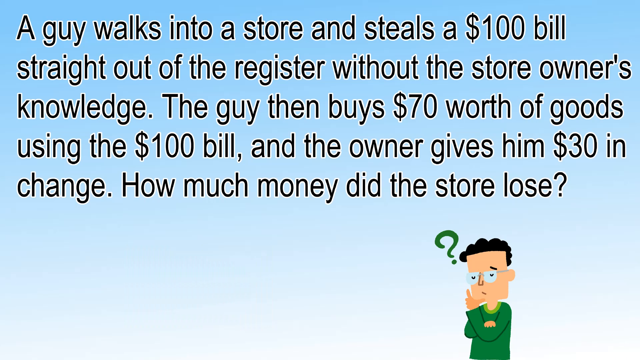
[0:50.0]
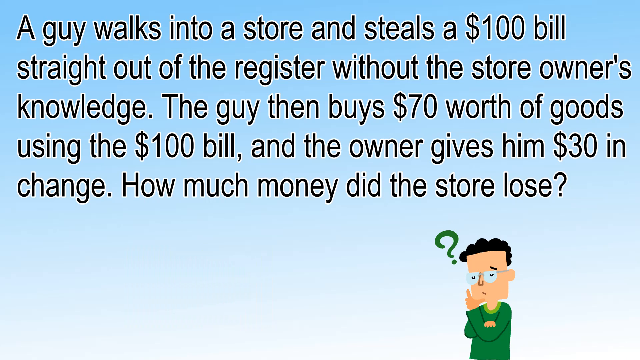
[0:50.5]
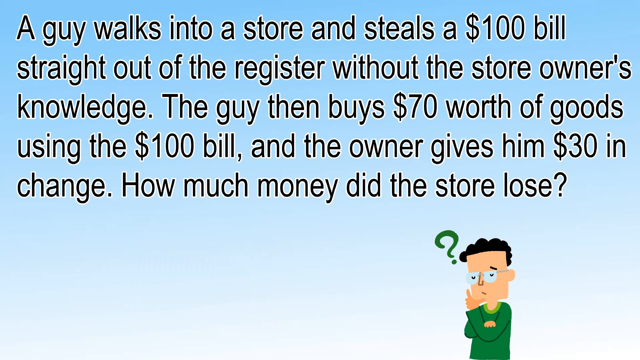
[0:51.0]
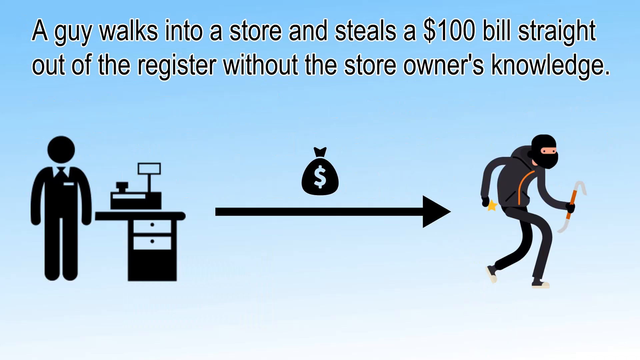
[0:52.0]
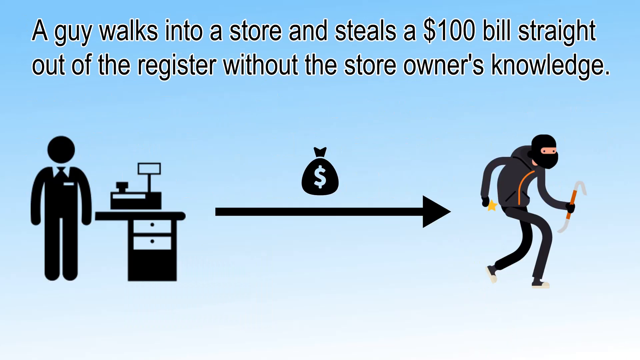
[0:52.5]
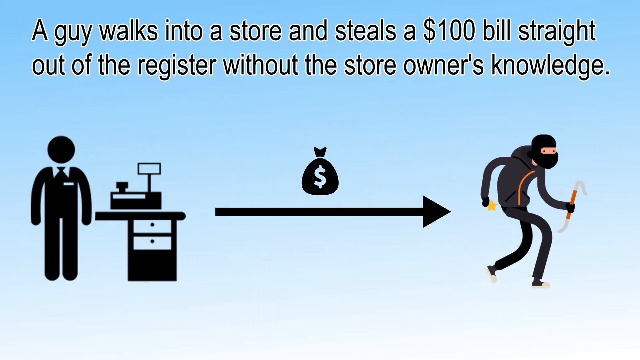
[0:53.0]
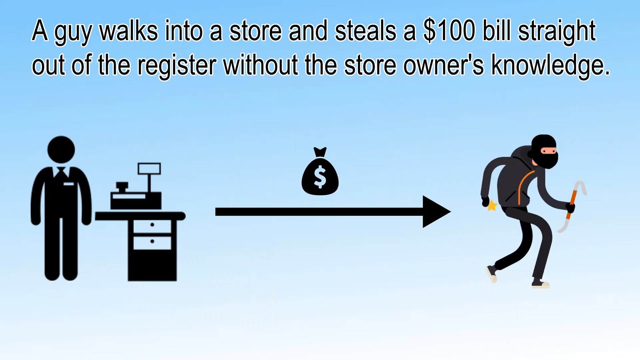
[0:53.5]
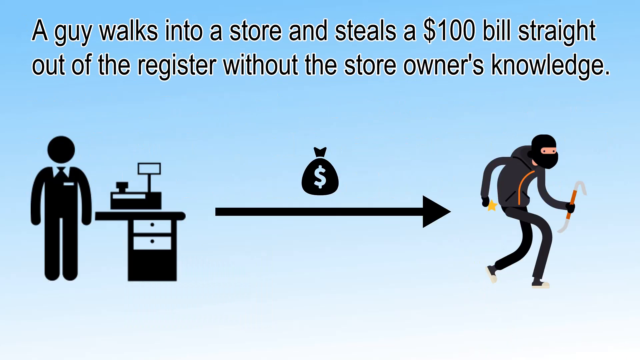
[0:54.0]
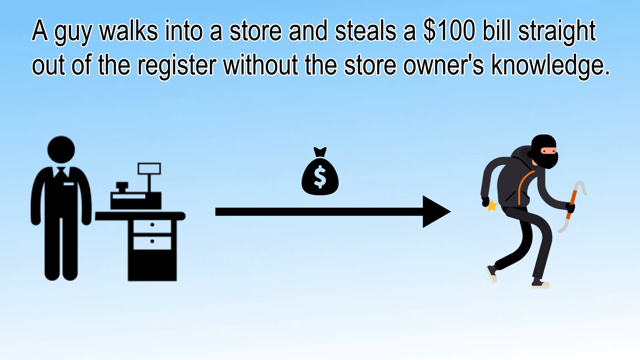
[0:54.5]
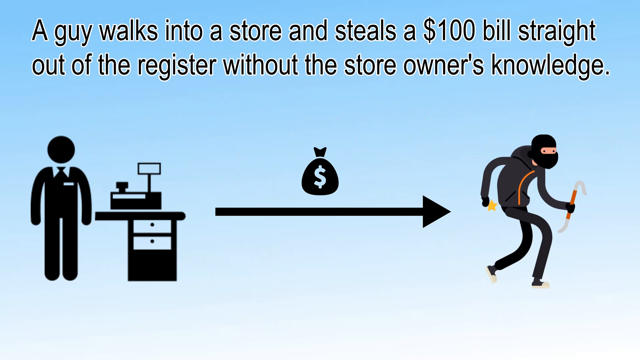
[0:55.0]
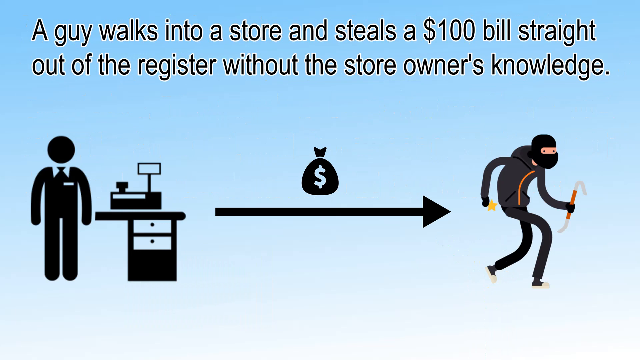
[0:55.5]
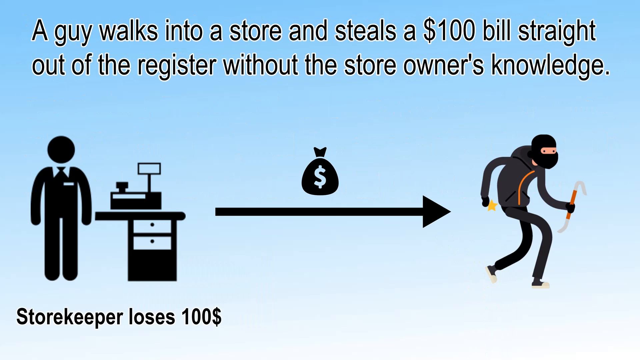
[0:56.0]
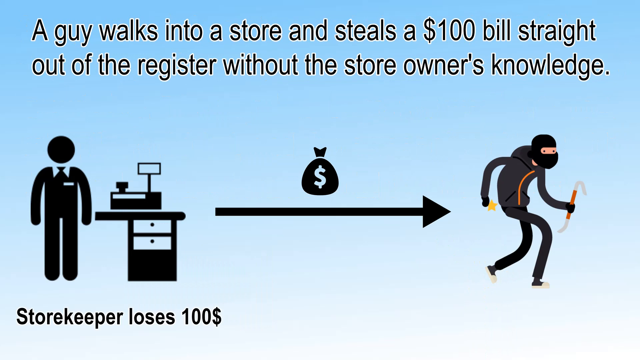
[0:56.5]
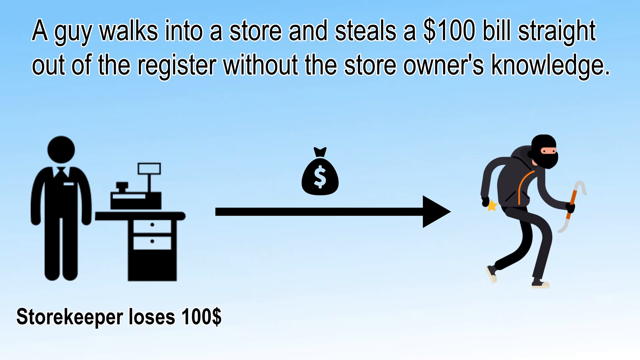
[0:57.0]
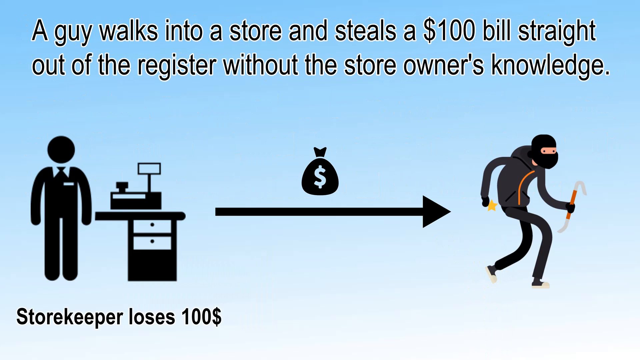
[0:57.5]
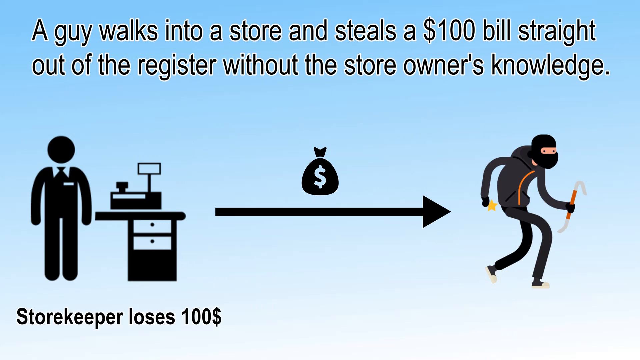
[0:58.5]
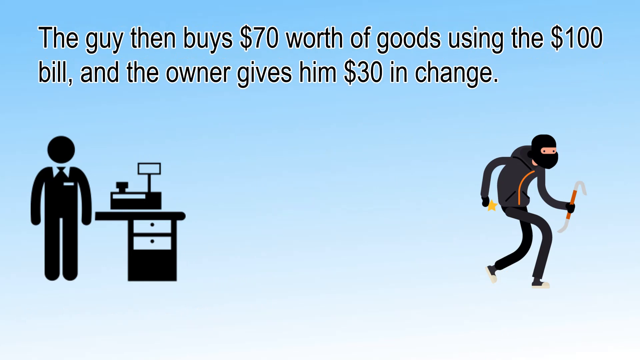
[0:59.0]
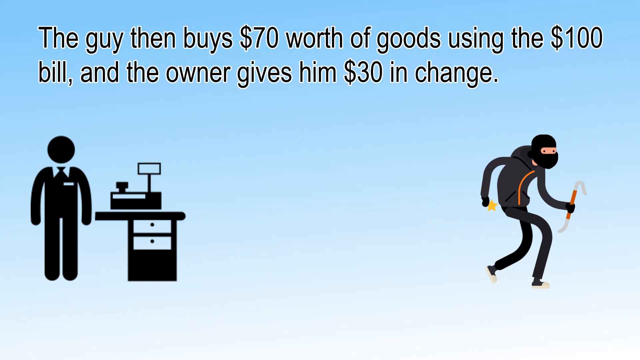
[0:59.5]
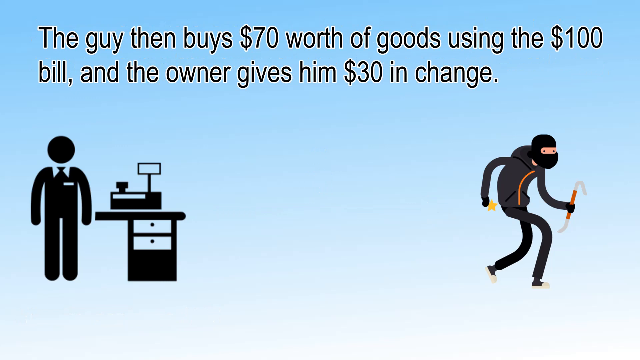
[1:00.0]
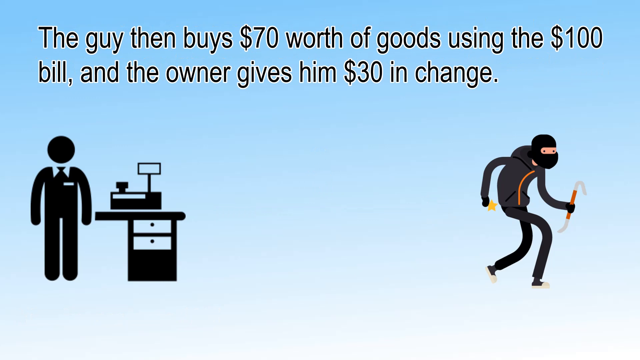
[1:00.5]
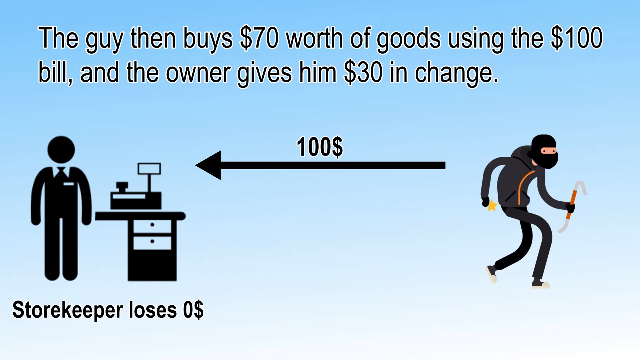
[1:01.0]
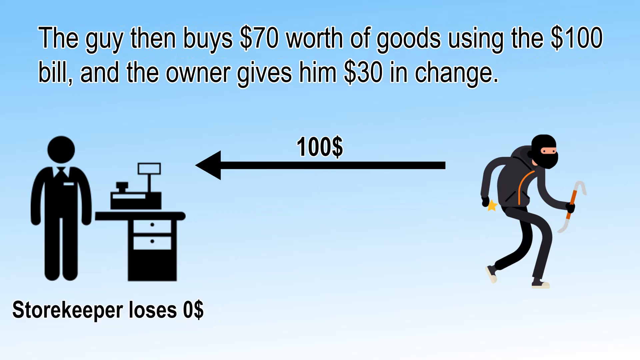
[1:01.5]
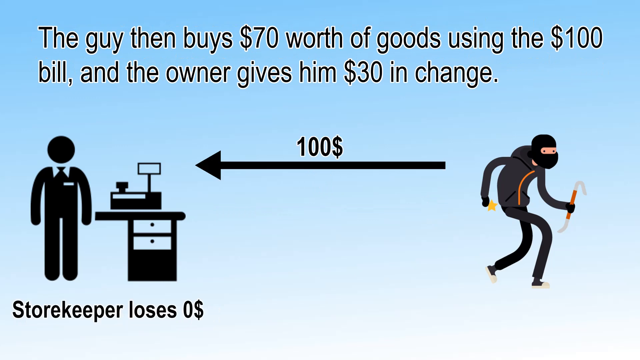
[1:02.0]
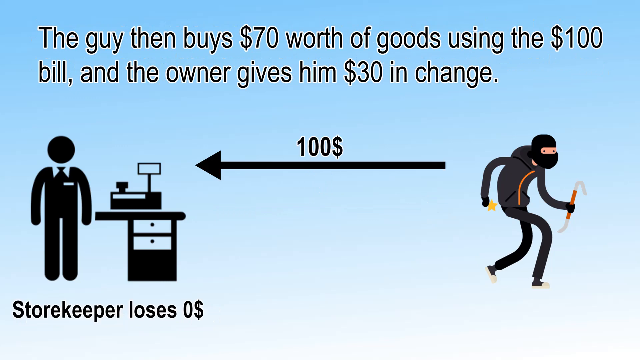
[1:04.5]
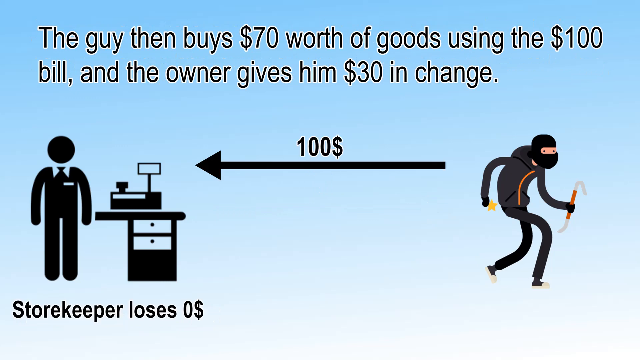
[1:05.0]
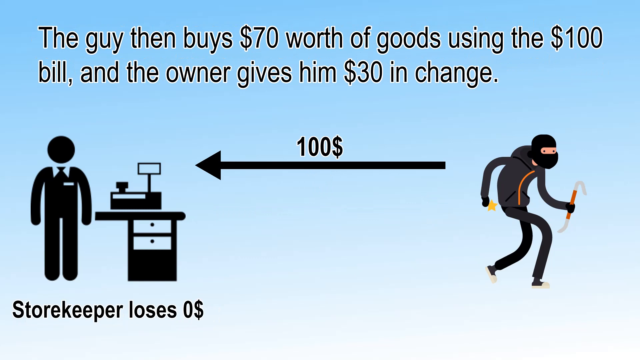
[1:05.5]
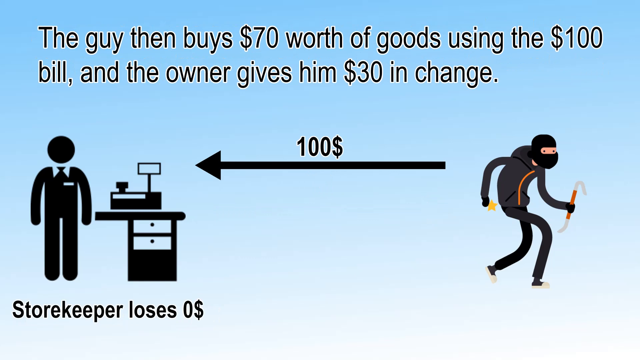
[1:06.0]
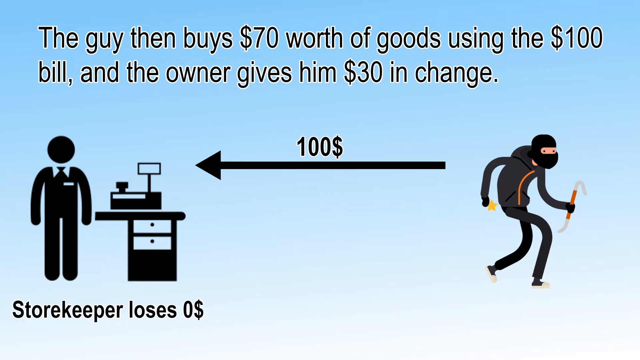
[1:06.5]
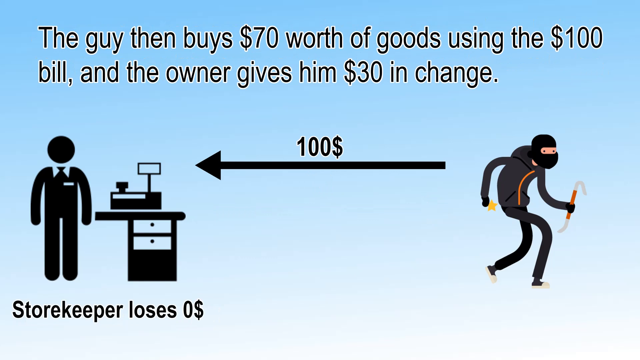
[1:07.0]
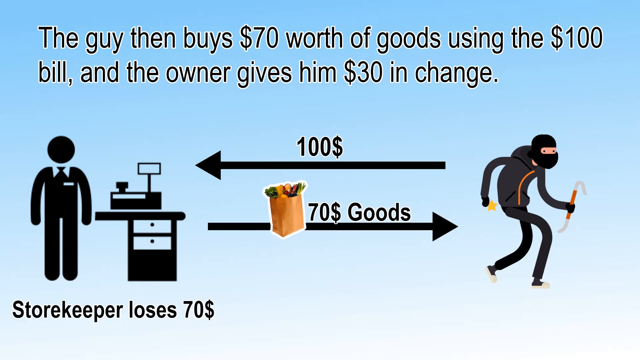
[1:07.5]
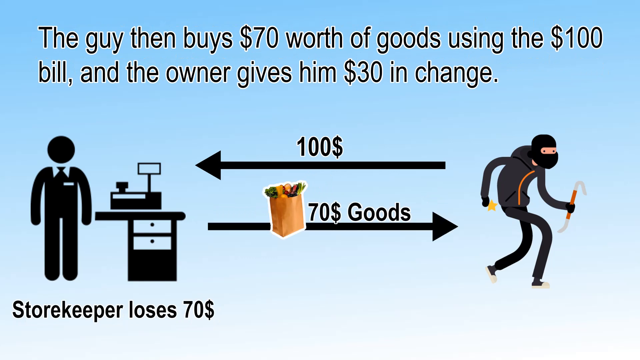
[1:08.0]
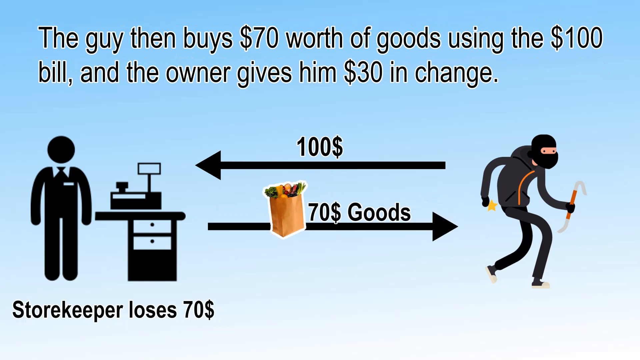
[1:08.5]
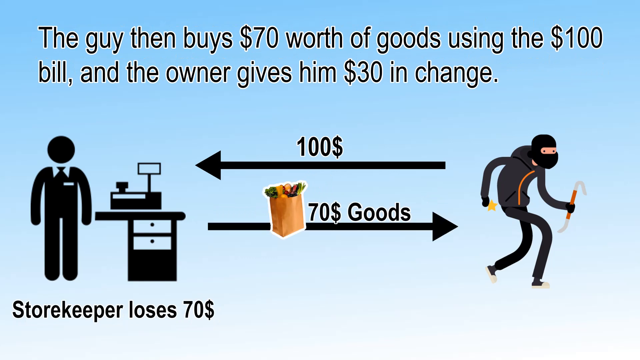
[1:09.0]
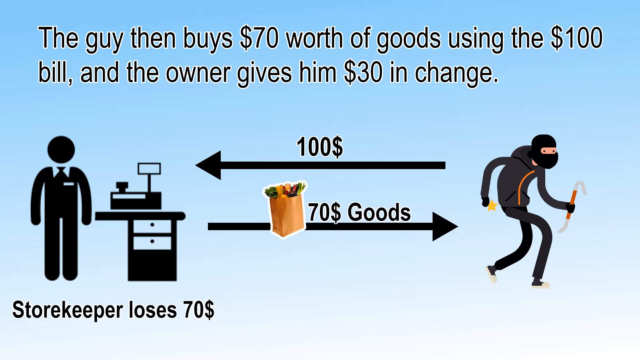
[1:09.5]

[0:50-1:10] The light blue background shows the math problem in black text taking up most of the screen: "a guy walks into a store and steals a $100 bill straight out of the register without the store owner's knowledge. The guy then buys $70 worth of goods using the $100 bill and the owner gives him $30 in change. How much money did the store lose?" At the very bottom is a cartoon clip art image of a man with curly black hair and glasses, wearing a long-sleeved green shirt, his arms crossed and one hand under his chin as if thinking, with a green question mark near his head.

The scene then changes. On the left is a silhouette clip art picture of a man standing next to a cash register, and to the right a long black arrow points to a clip art cartoon of a man dressed like a thief, wearing a black mask, black hoodie and black pants, holding a crowbar in one hand and a yellow star in the other. Above the arrow is a bag of money. Text at the top of the screen reads "a guy walks into a store and steals a $100 bill straight out of the register without the store owner's knowledge," and at the bottom it says "storekeeper loses $100." The top text then continues: "The guy then buys $70 worth of goods using the $100 bill and the owner gives him $30 in change." A black arrow appears going from the thief to the store owner with "$100" written on top of it, and the bottom text says "storekeeper loses $0." Then a black arrow appears going from the storekeeper to the thief, with a small image of a grocery bag on top of it and the text "$70 goods."